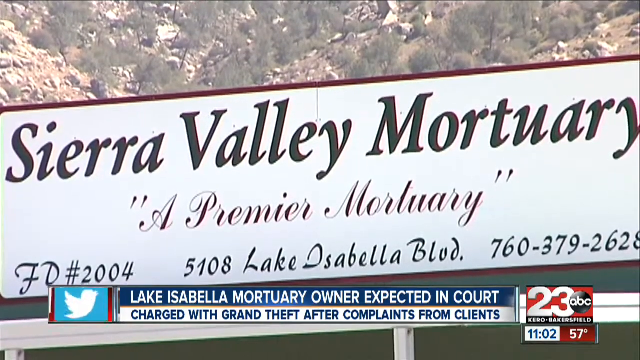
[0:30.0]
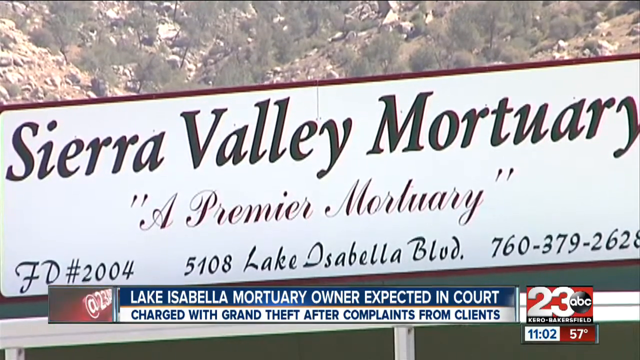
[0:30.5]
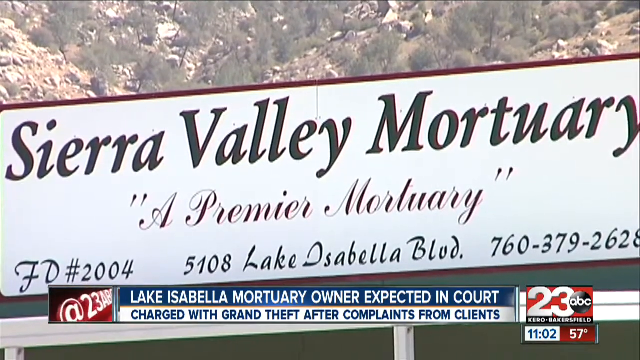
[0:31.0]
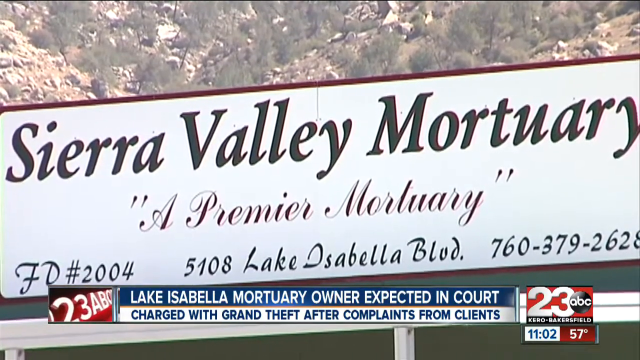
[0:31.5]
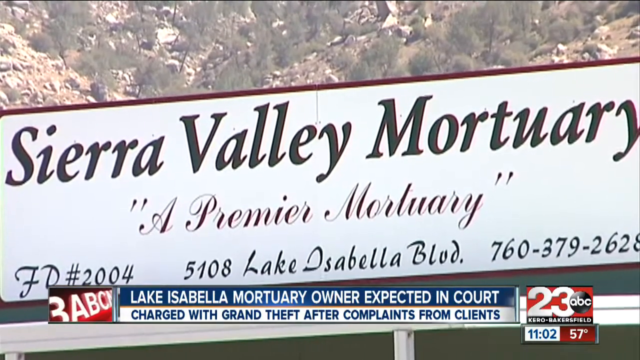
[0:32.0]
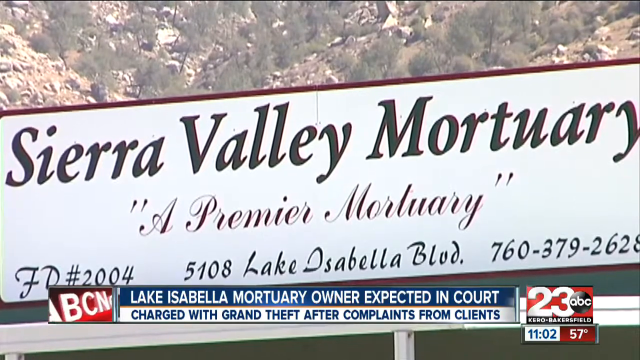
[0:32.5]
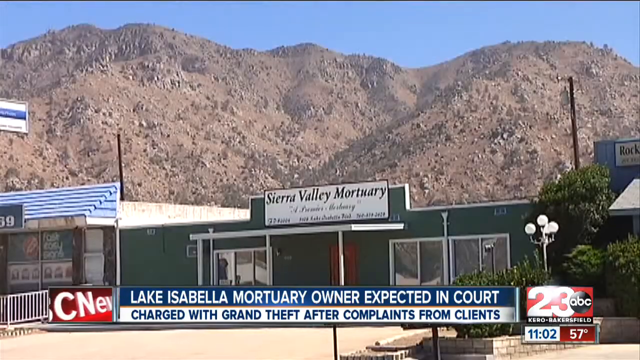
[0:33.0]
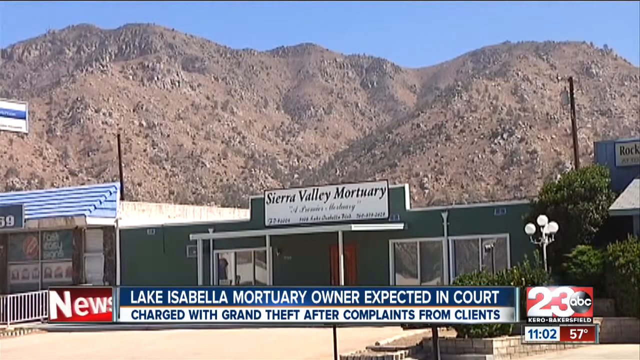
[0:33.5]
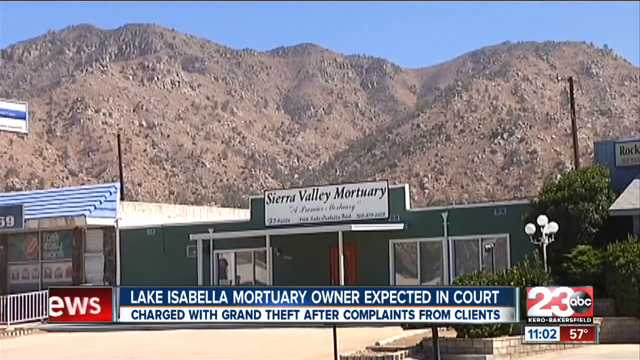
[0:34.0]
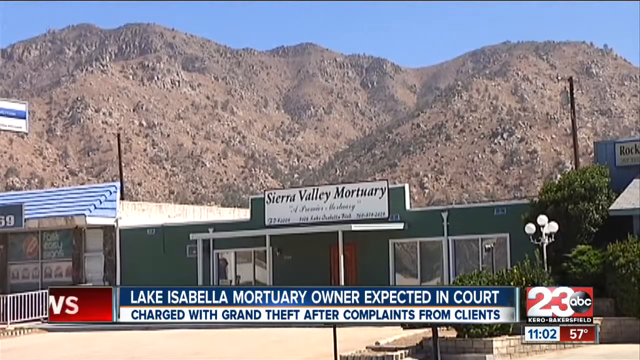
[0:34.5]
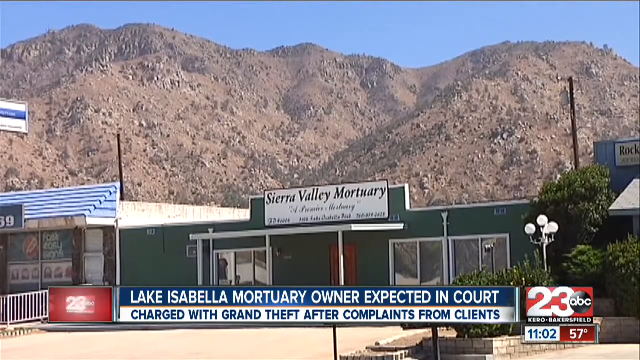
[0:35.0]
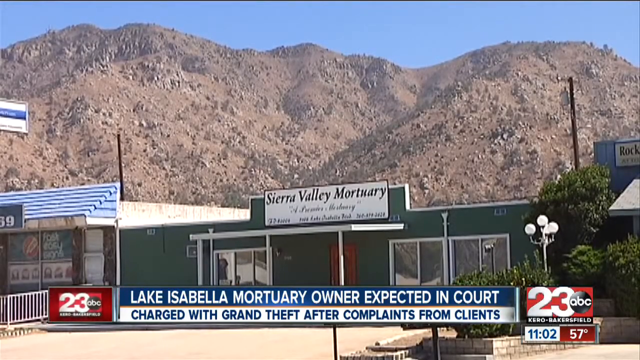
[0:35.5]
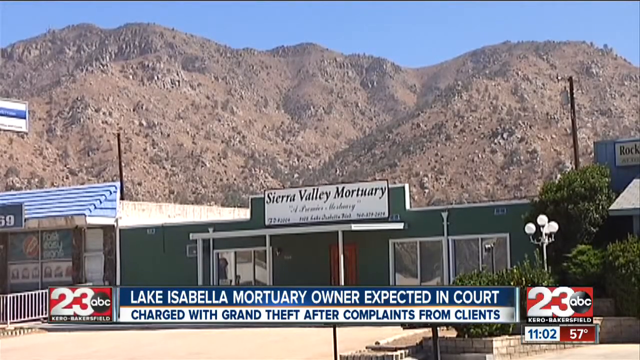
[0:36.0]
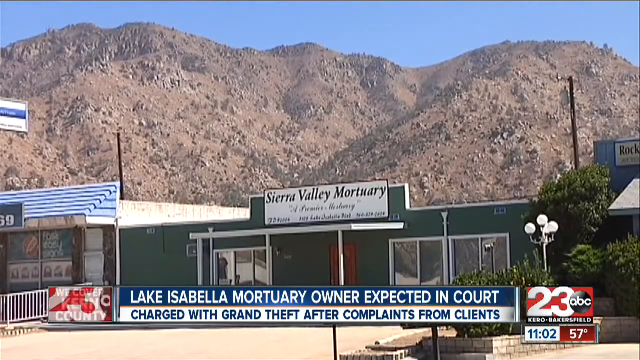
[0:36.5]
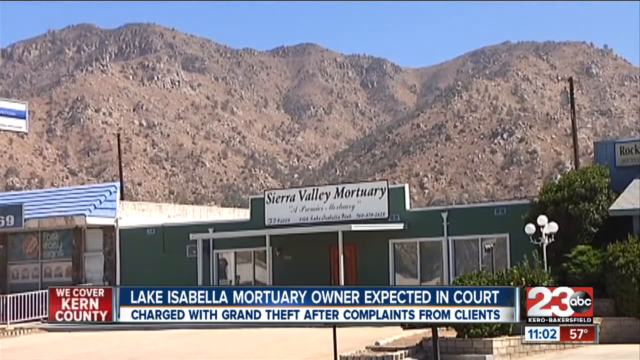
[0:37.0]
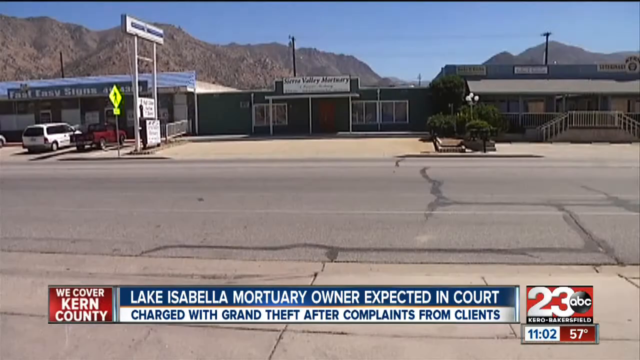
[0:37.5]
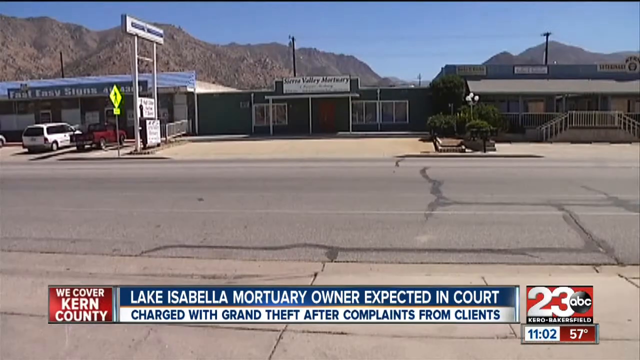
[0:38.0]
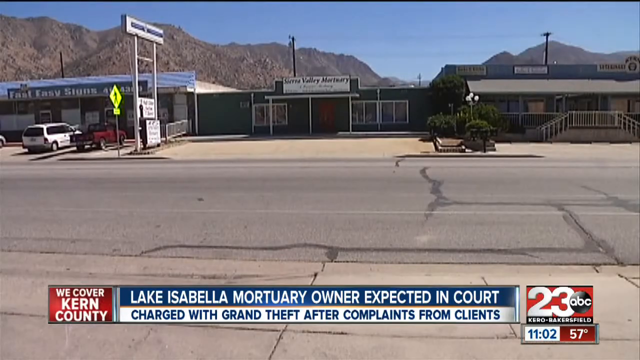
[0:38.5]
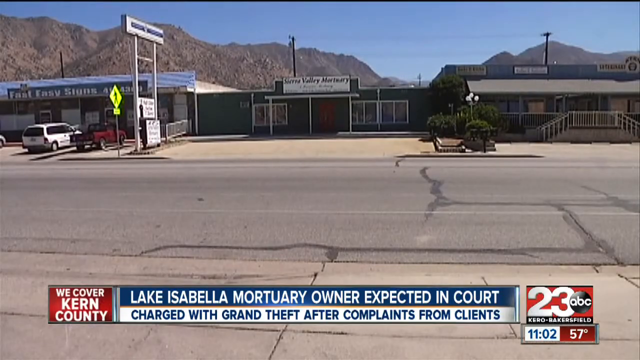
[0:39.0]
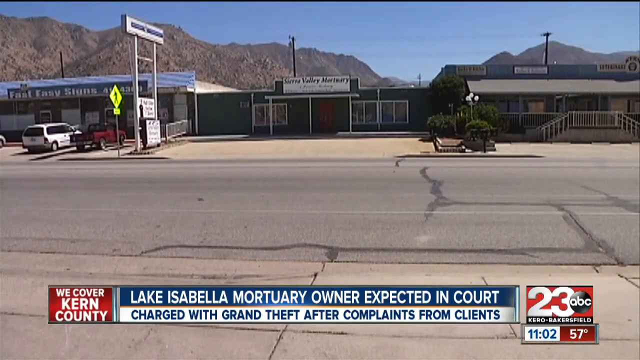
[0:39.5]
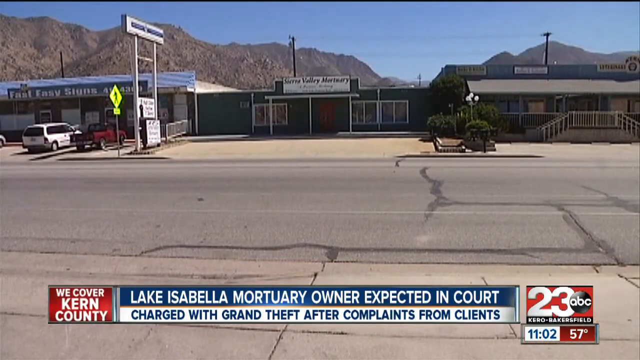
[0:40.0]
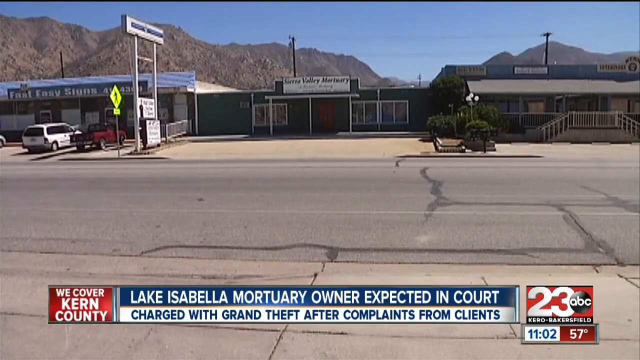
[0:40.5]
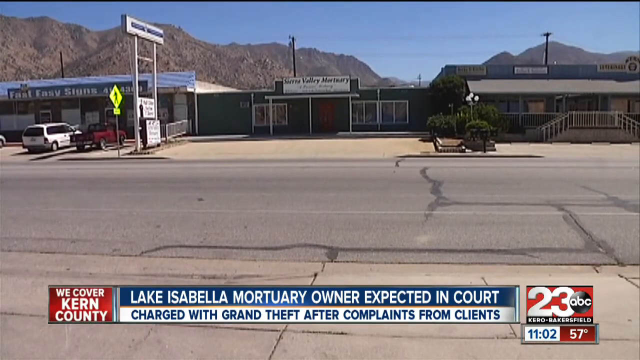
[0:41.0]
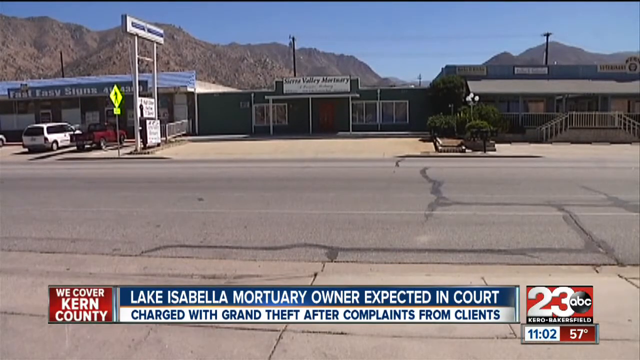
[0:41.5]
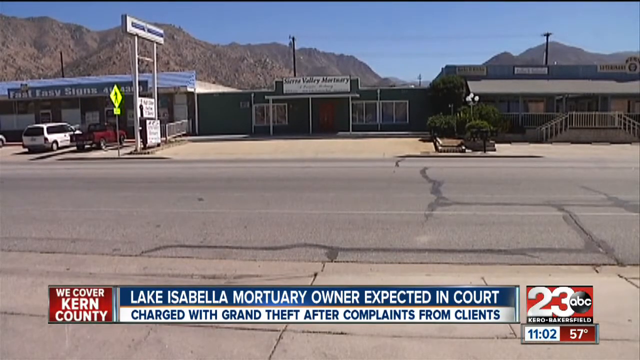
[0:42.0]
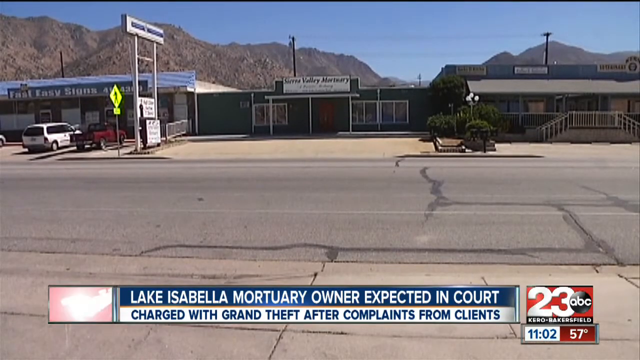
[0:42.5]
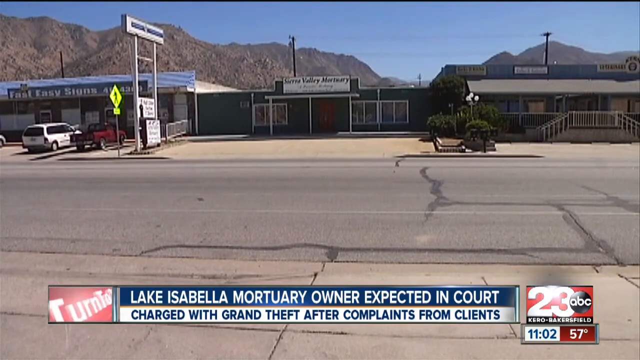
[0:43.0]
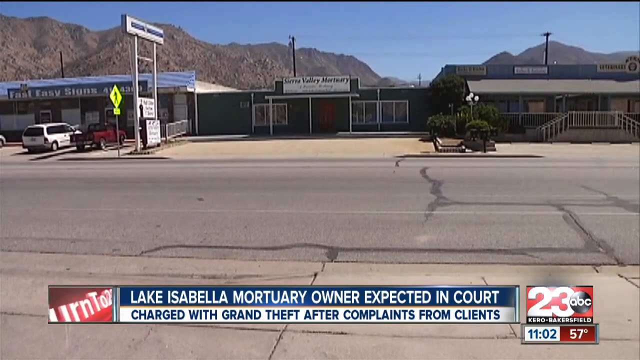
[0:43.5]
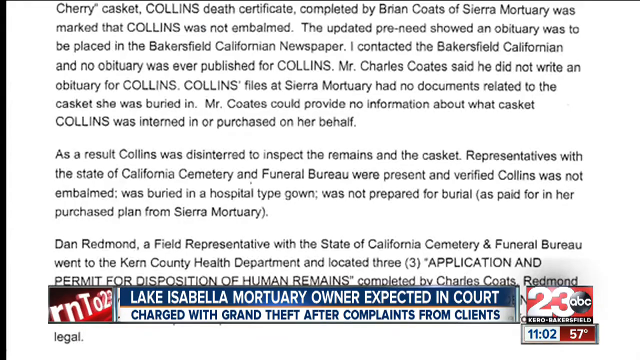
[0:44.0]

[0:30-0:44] The sign of the Sierra Valley Mortuary is shown with hills or mountains behind it. It reads "a Premier Mortuary, FD2004, 5108 Lake Isabella Boulevard, 760-379-2628." Footage of the business is shown both zoomed in and from afar. There seem to be other businesses surrounding it. No cars and no visible customers or staff are in the area around the mortuary.